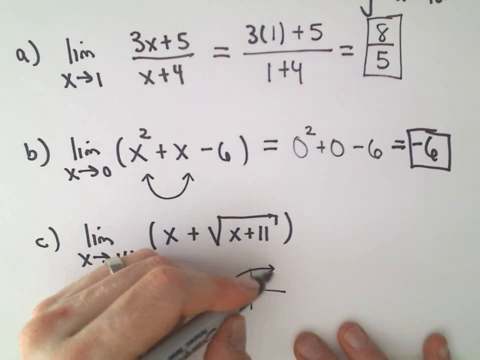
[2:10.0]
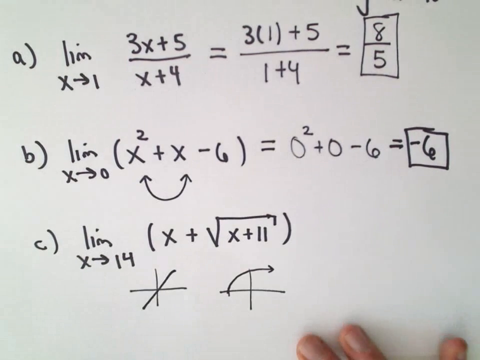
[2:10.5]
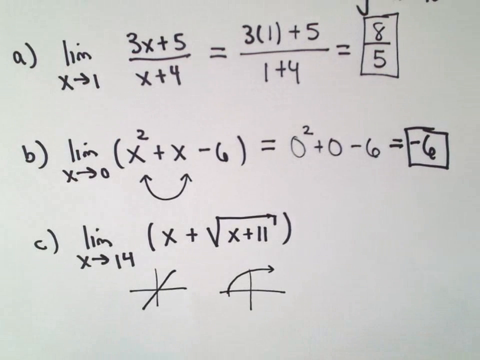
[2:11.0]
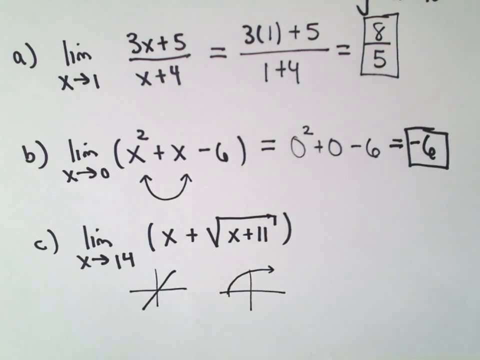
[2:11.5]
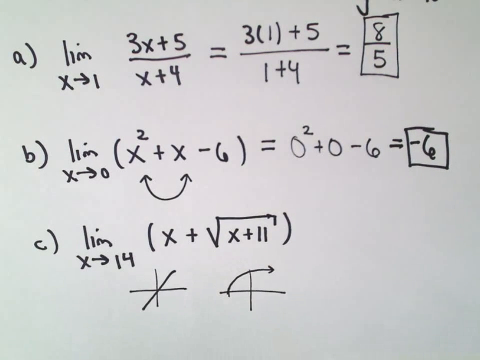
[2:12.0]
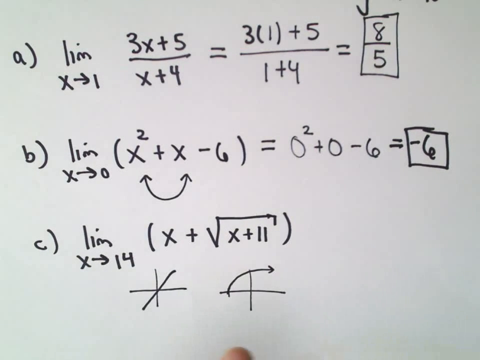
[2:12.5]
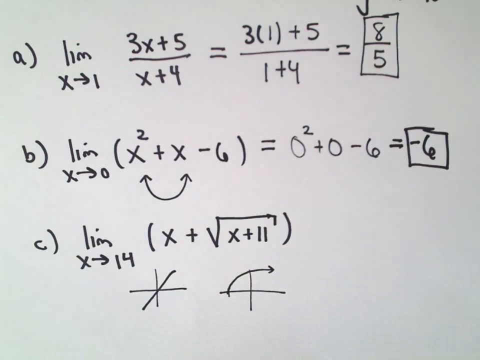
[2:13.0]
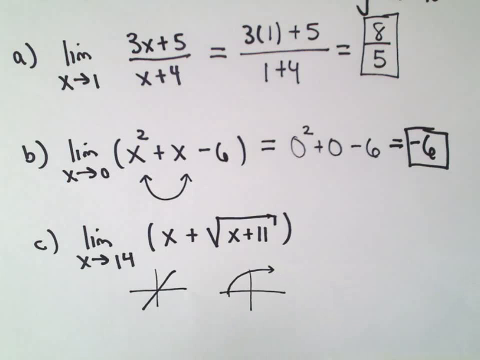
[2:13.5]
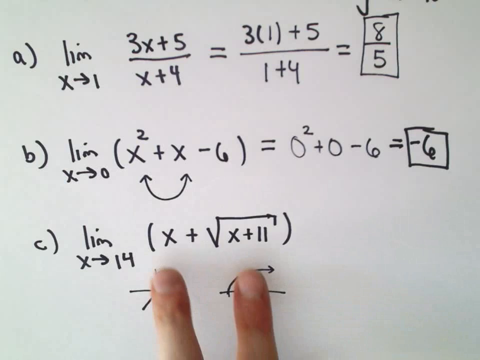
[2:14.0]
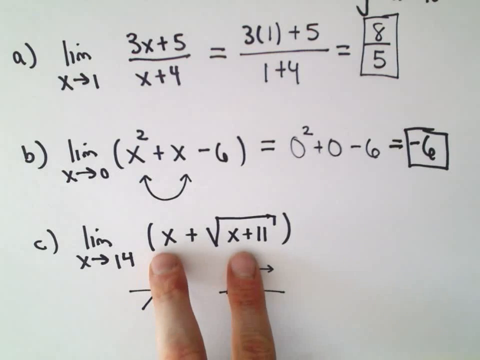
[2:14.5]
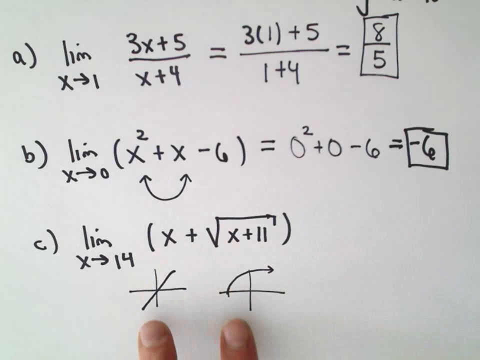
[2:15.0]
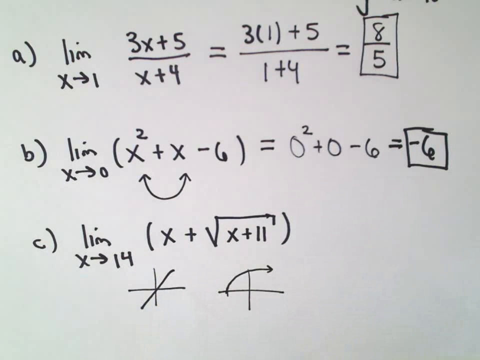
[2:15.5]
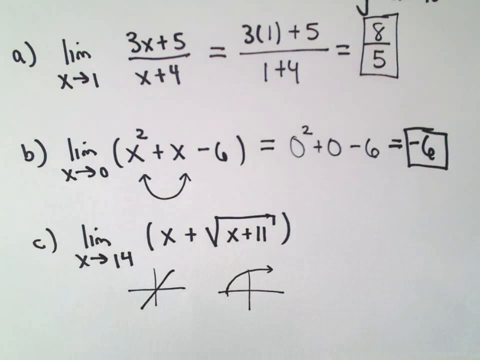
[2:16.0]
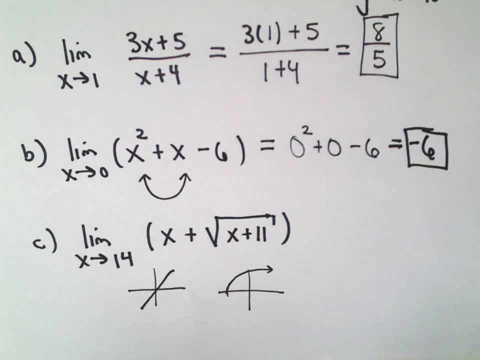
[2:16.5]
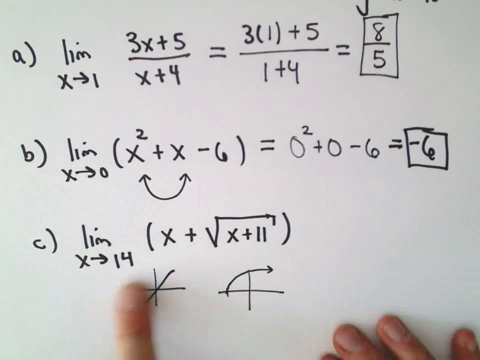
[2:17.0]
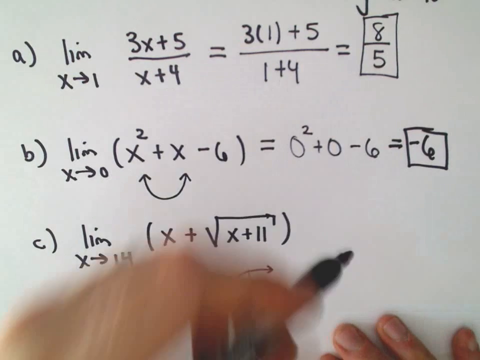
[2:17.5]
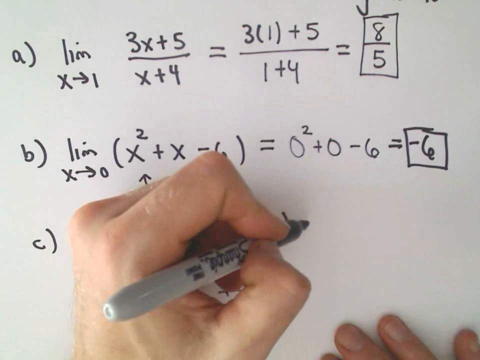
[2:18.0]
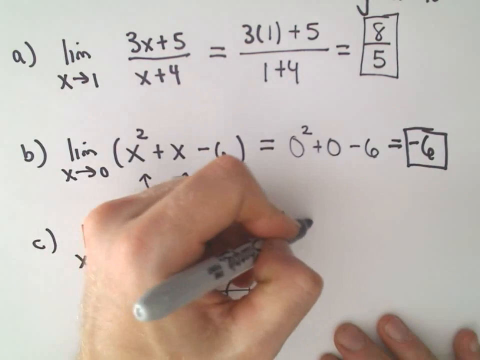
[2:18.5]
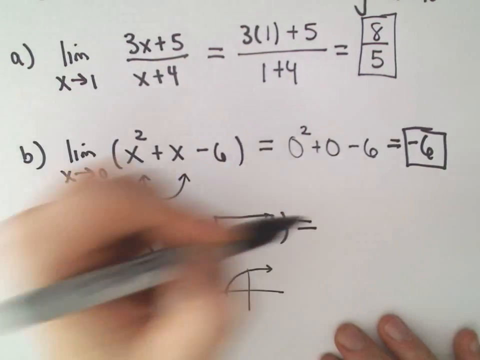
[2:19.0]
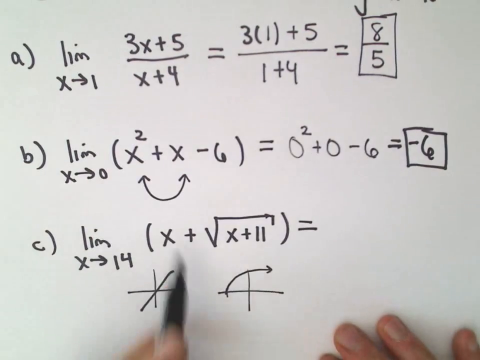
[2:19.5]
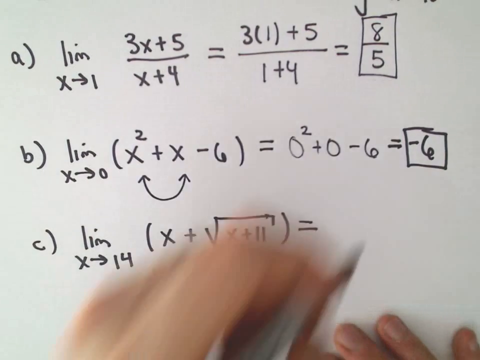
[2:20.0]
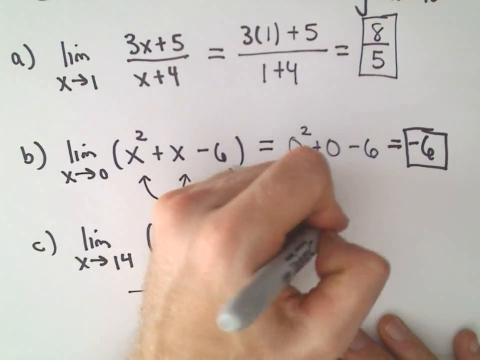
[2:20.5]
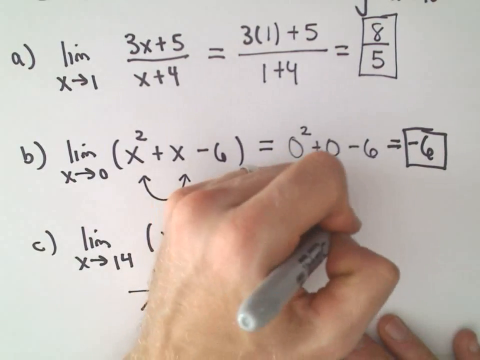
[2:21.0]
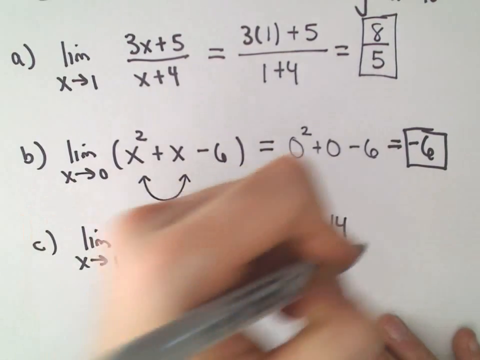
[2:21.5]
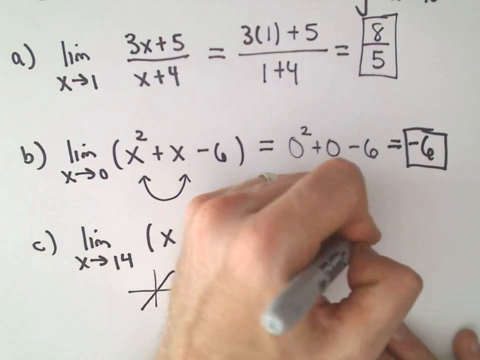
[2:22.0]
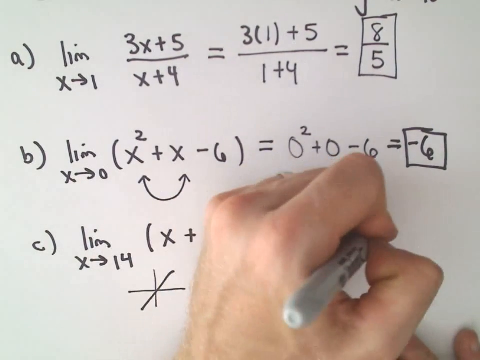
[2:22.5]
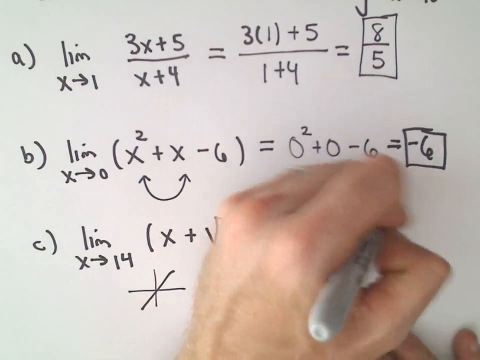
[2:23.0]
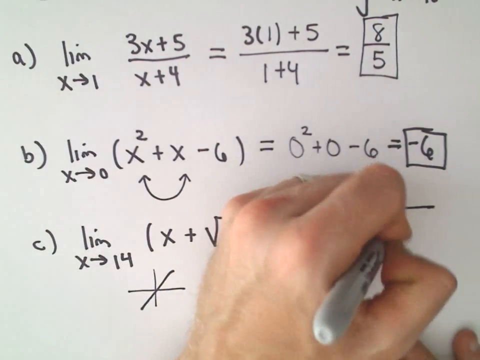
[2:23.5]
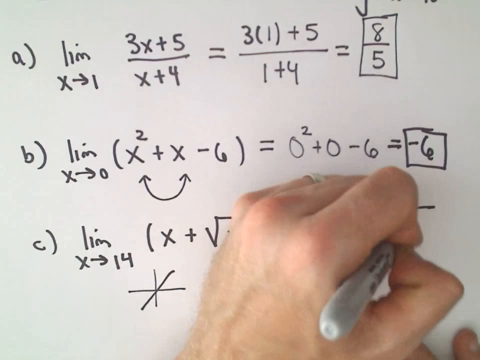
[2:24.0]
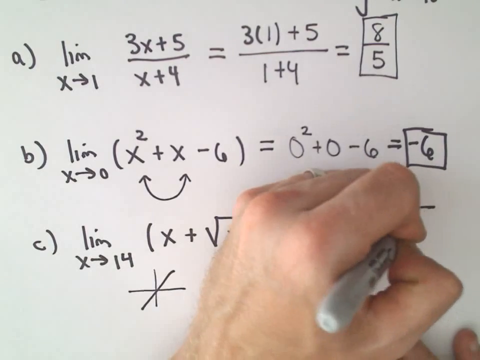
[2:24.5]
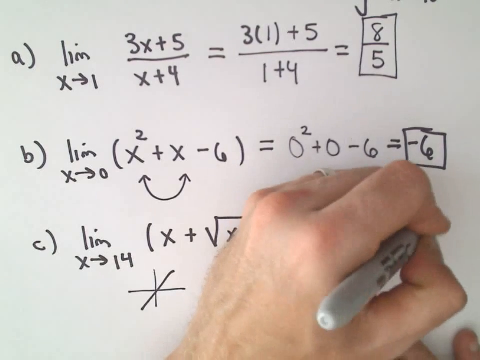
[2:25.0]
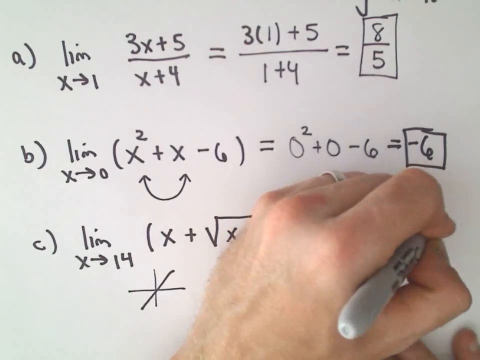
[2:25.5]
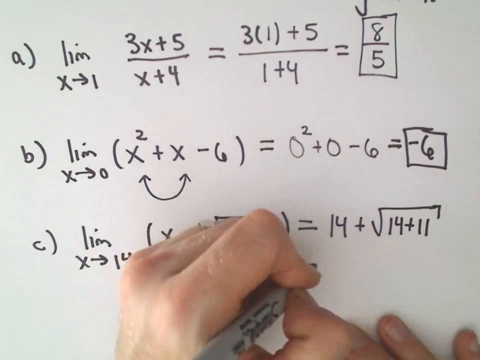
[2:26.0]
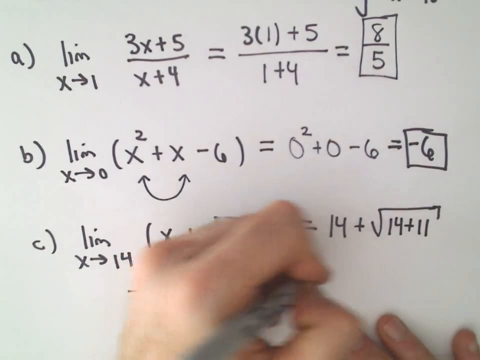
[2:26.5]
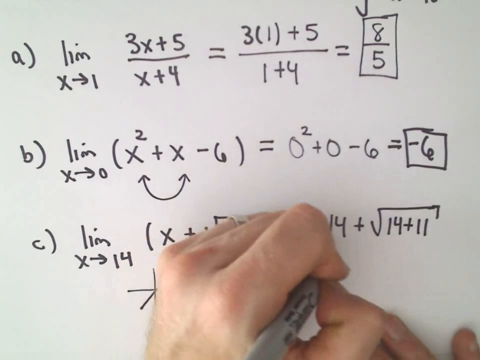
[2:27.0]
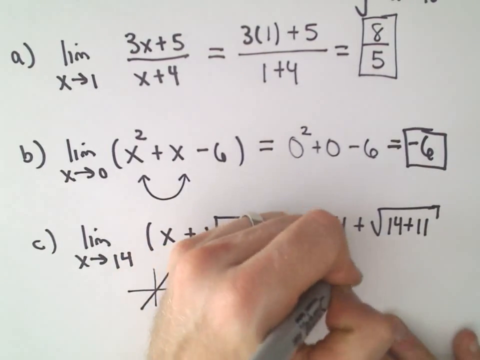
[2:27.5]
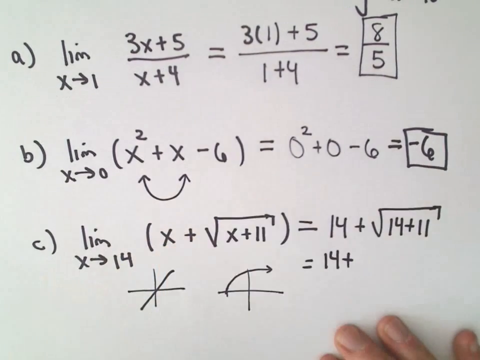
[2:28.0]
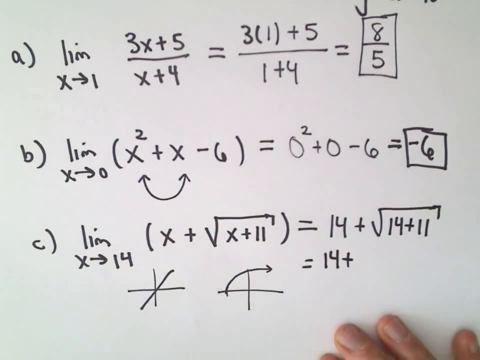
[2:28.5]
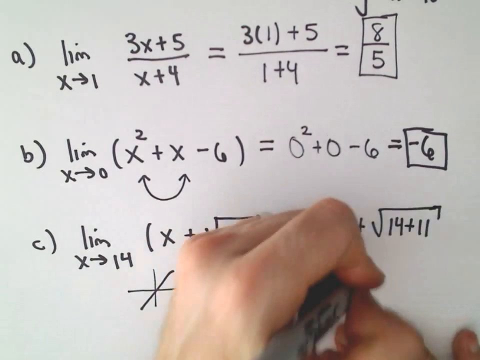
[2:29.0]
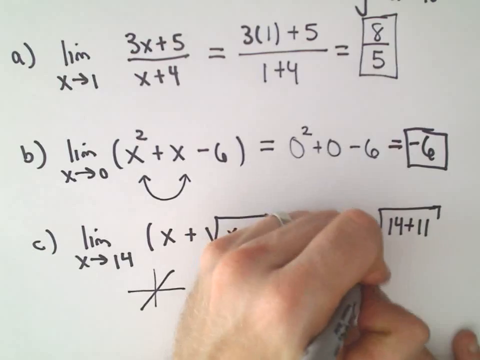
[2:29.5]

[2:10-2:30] The same sheet of white paper shows the curved line graph he hand-drew. He uses two fingers to point out the two graphs next to each other: the plus sign with a line through the middle, and the one on the right with the curved arrow line. He removes his finger, points them out once more, and then points at each one individually with one finger. He then brings the sharpie up to equation C and writes an equal sign. He appears to write 14, seen very briefly, and keeps writing; when his hand shifts lower, the full line is revealed: 14 plus the power of 14 plus 11. Below that he writes another 14 plus and a power sign, with nothing else there yet.